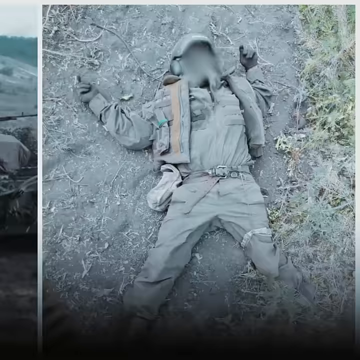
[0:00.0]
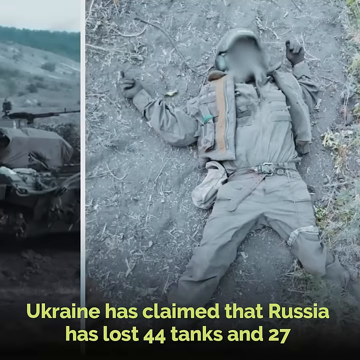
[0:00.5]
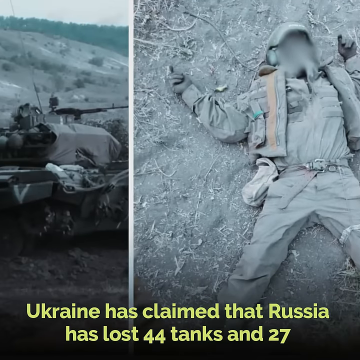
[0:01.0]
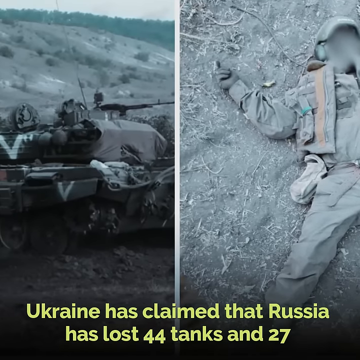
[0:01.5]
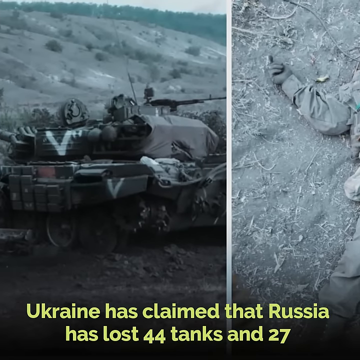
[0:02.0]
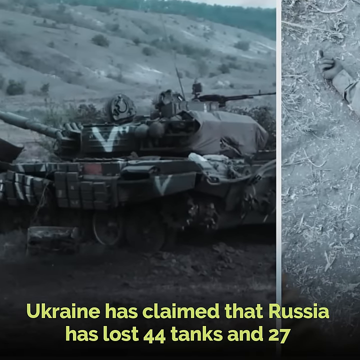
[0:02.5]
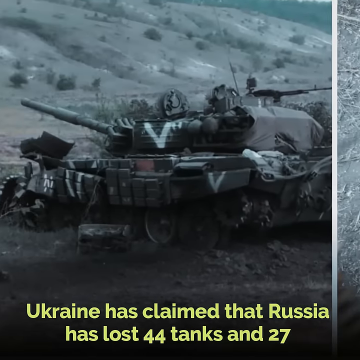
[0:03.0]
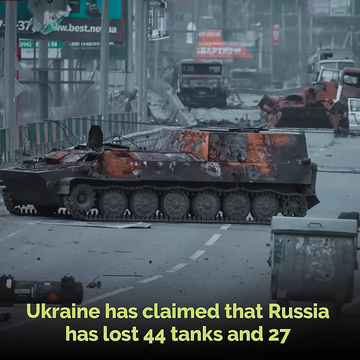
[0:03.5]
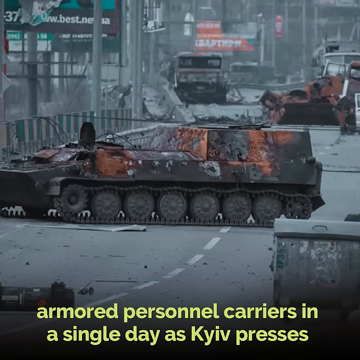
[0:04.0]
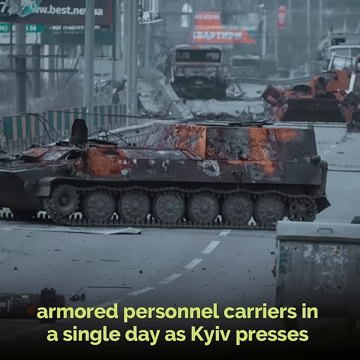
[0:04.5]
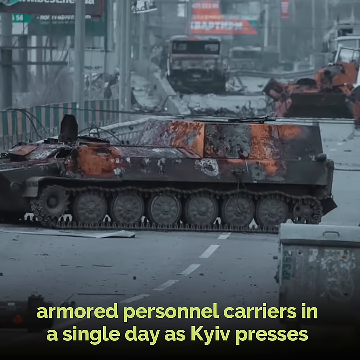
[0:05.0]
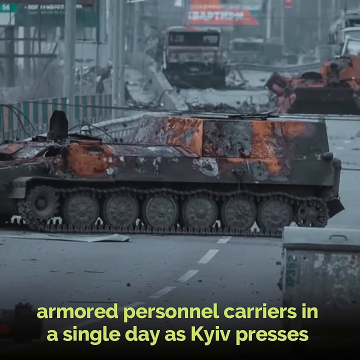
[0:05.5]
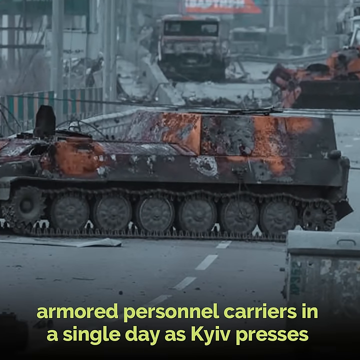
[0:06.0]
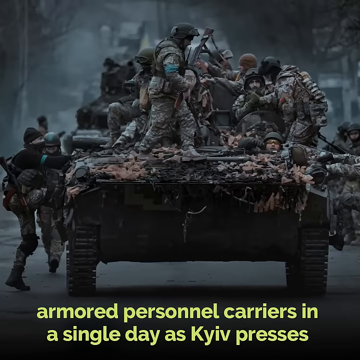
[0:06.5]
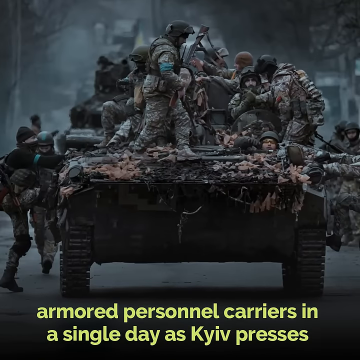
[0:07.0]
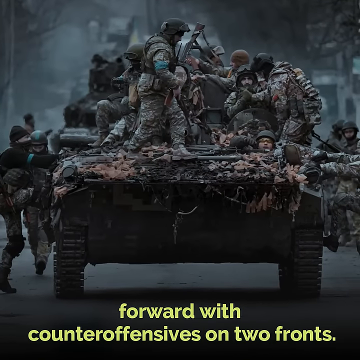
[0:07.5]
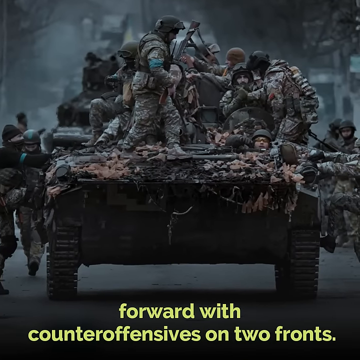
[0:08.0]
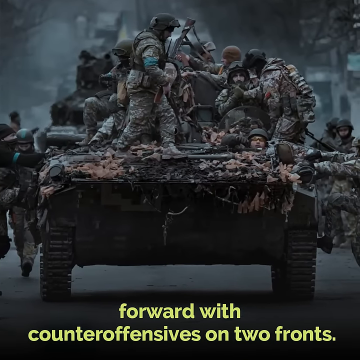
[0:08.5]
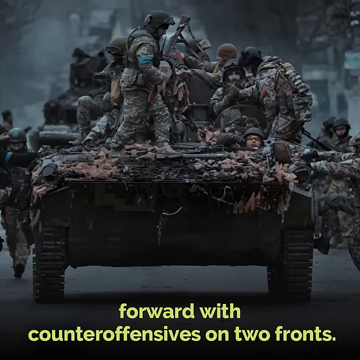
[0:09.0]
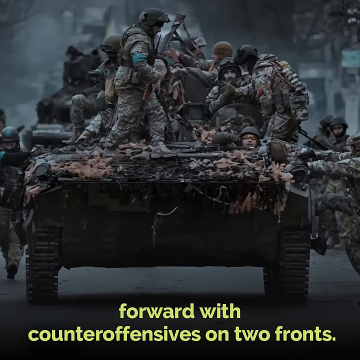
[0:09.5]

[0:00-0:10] The video opens on an image of a person on the ground who appears to be a dead soldier or pilot, though it is hard to say, and they may possibly be a soldier who is sleeping. Their face is blurred and one of their hands is up. They wear green pants, a green shirt and a green jacket, along with some sort of helmet and earmuffs or earphones covering their ears. On the side there is a tank, and text below reads "Ukraine has claimed that Russia has lost 44 tanks" along with a figure of 27-something armored personnel carriers "in a single day as Kiev presses". The video cuts to what looks like a bridge or a road, where a beat-up tank in tatters has holes in it, with pieces of metal on the ground. Another vehicle and some writing are in the background, and the camera kind of zooms in to the tank. Next comes a shot of a tank with all types of soldiers on it: some soldiers are trying to get on the tank, one soldier has a gun, one is sitting down, and there are soldiers on both sides. Another tank is behind it, and they are kind of moving along on the road. It is hard to tell whether this is the Ukrainian or the Russian side, possibly the Ukrainian side. Text at the bottom reads "armored personnel carriers in a single day as Kiev presses", and the camera kind of pans to the left or the right.